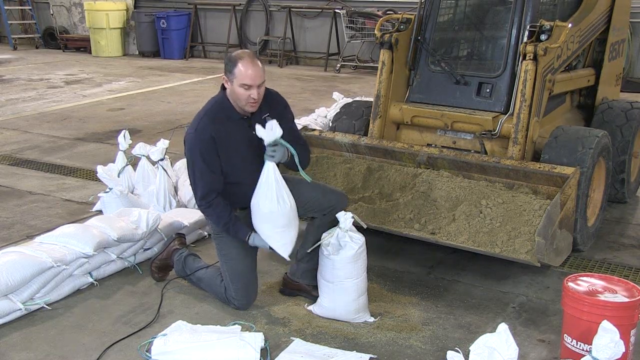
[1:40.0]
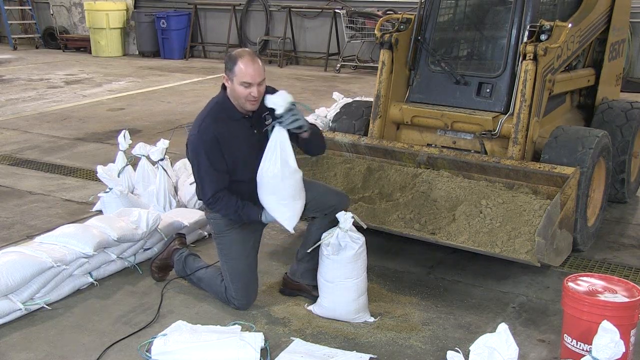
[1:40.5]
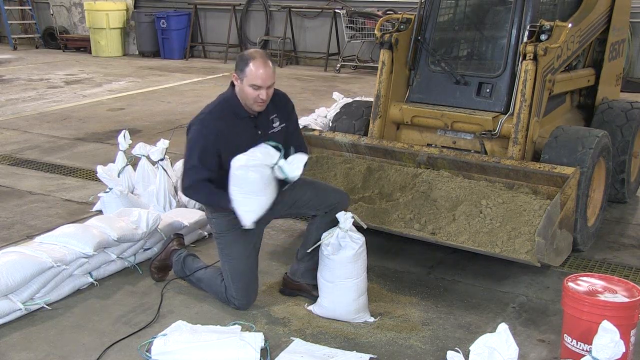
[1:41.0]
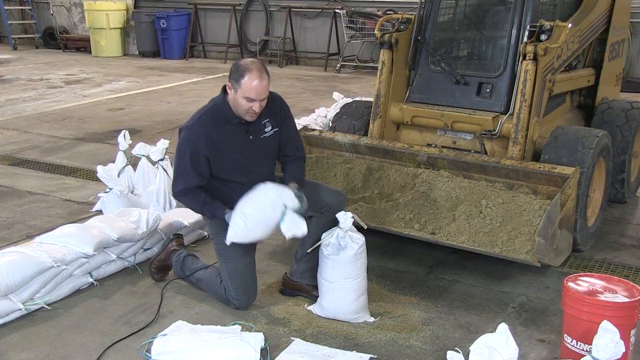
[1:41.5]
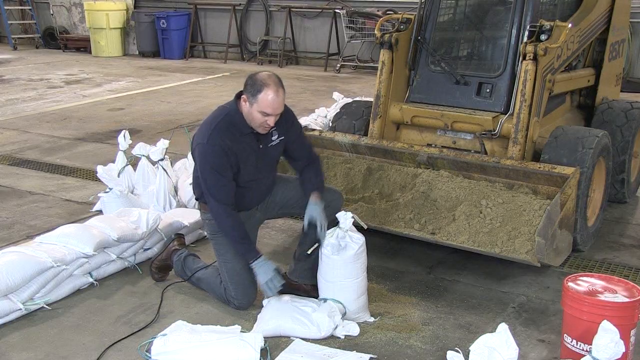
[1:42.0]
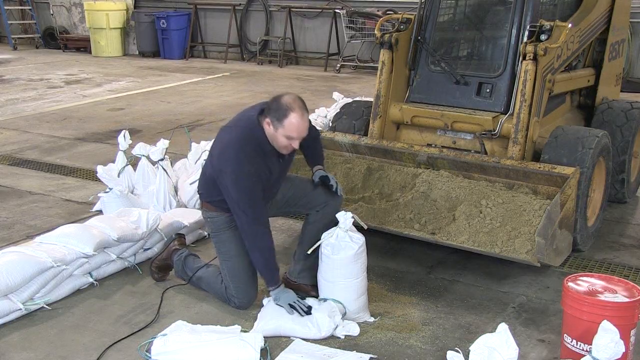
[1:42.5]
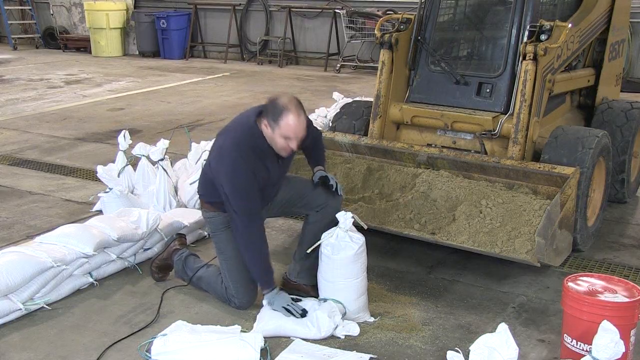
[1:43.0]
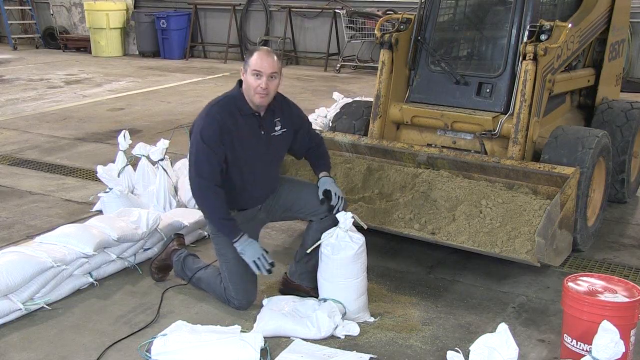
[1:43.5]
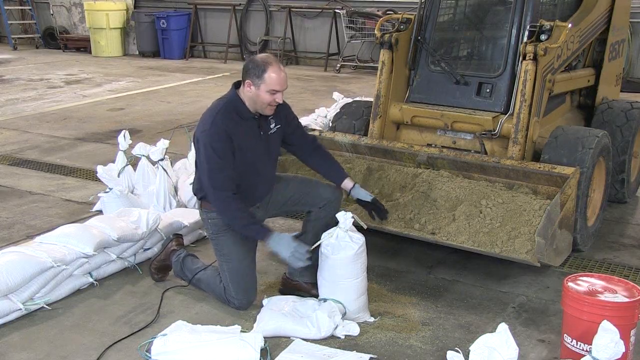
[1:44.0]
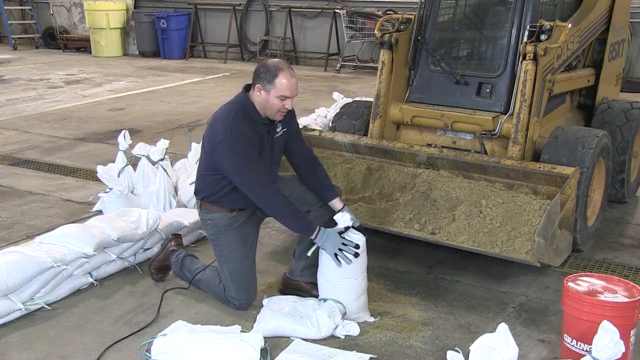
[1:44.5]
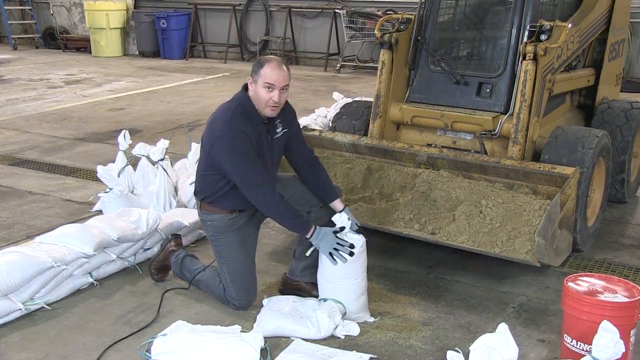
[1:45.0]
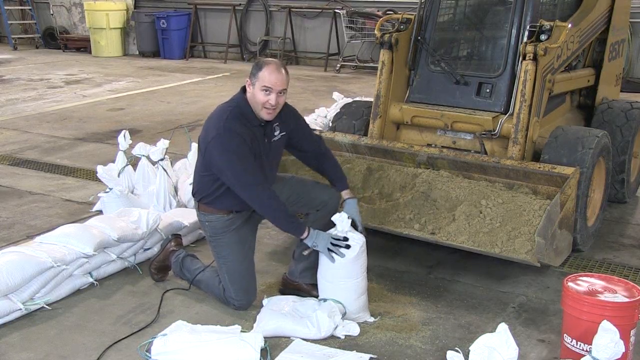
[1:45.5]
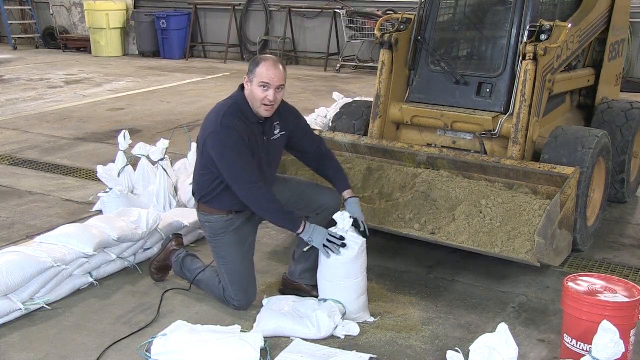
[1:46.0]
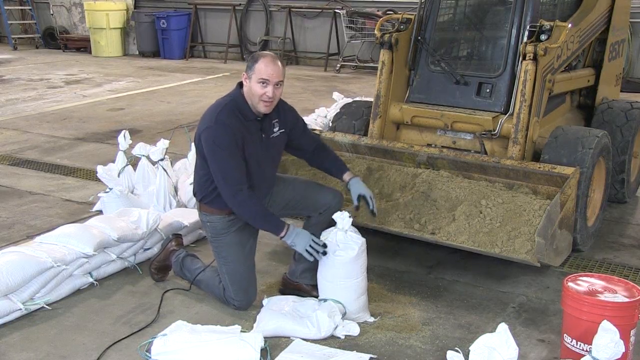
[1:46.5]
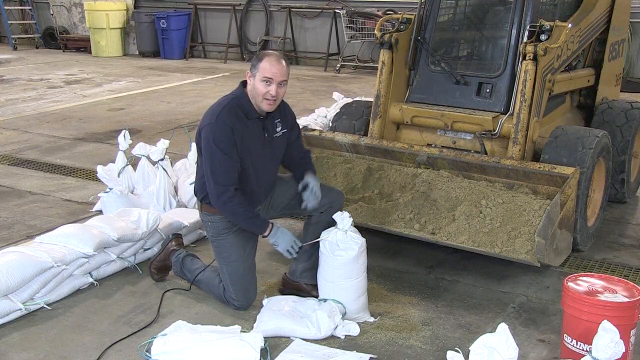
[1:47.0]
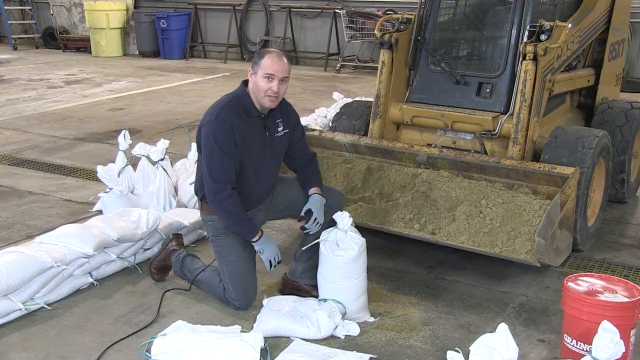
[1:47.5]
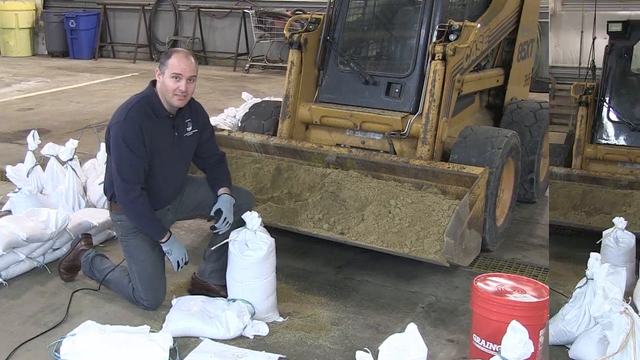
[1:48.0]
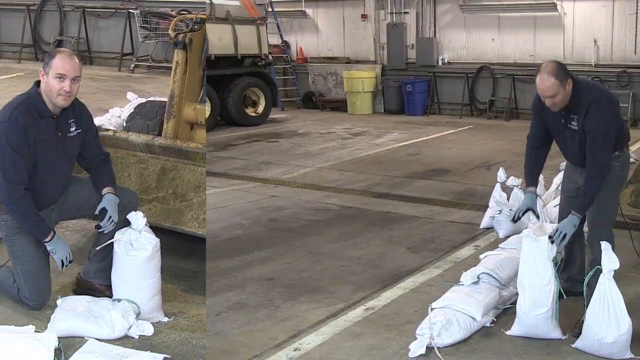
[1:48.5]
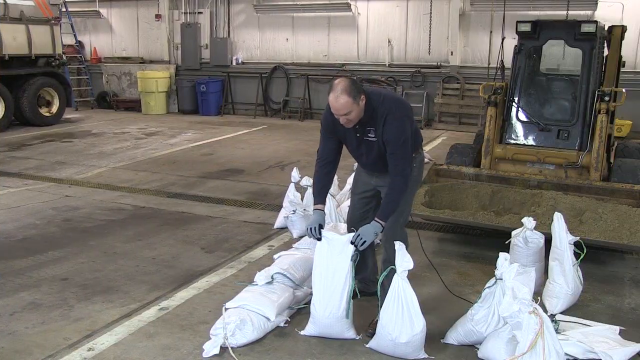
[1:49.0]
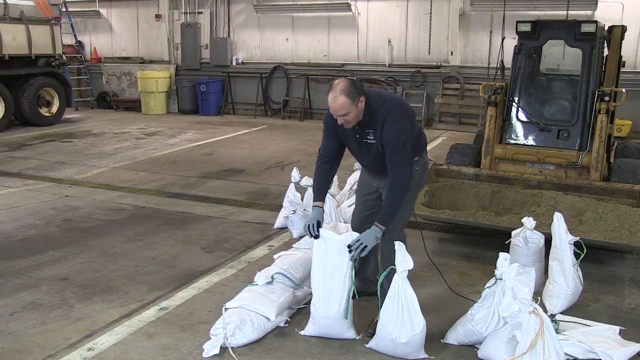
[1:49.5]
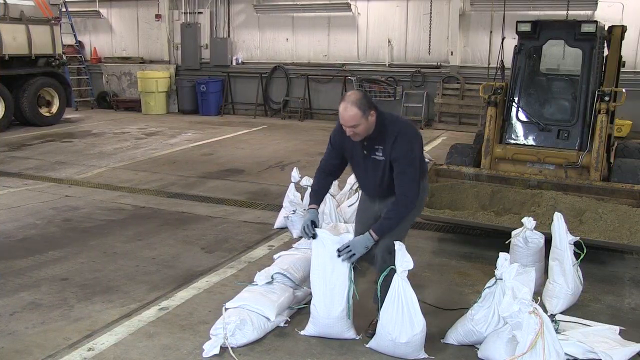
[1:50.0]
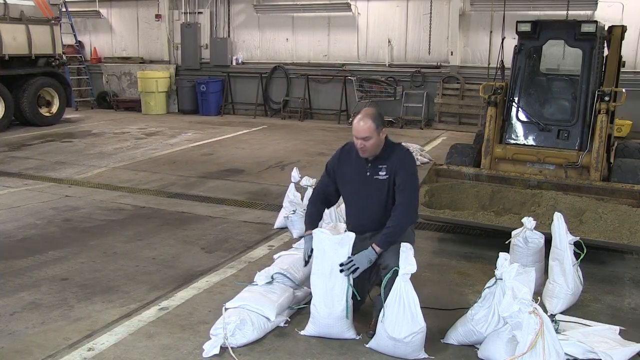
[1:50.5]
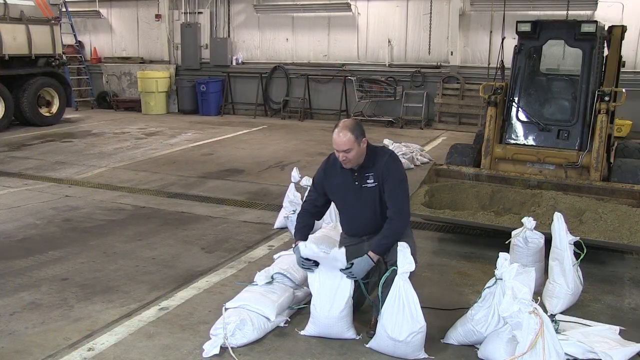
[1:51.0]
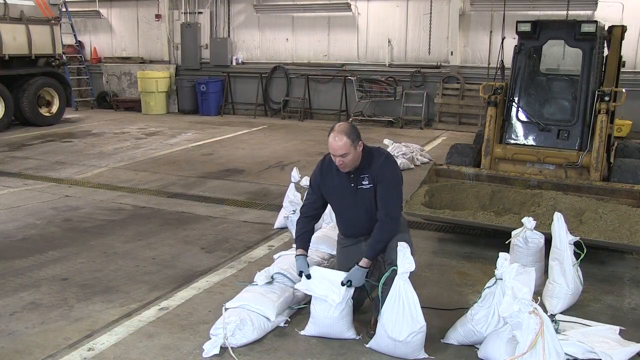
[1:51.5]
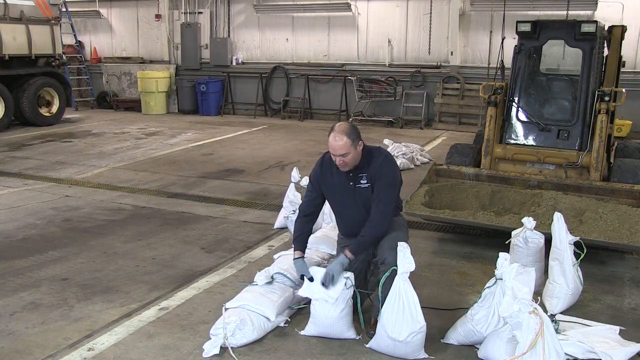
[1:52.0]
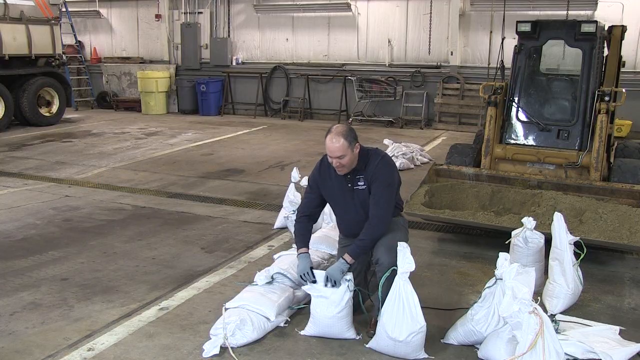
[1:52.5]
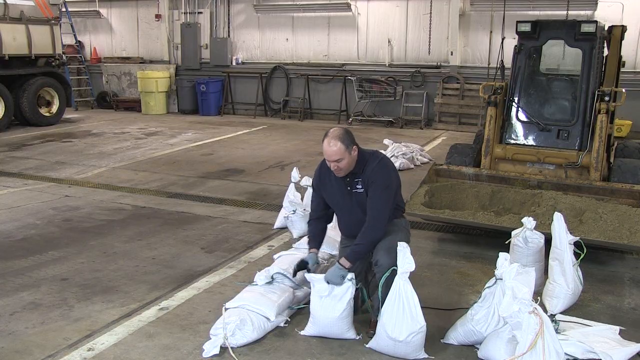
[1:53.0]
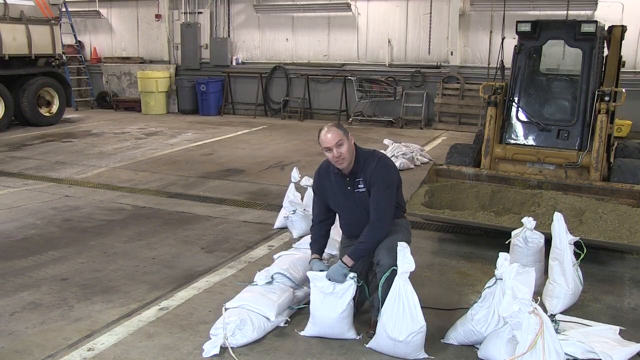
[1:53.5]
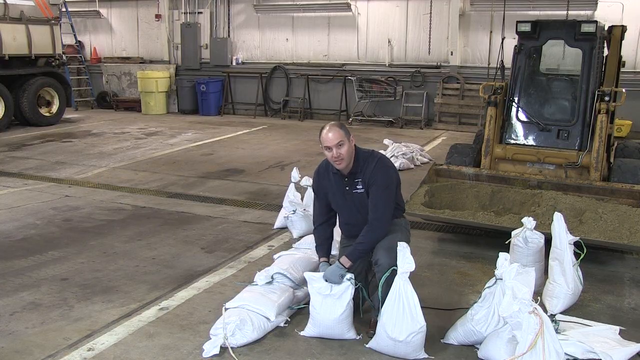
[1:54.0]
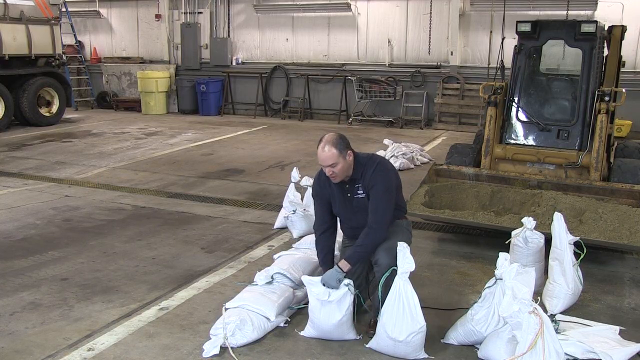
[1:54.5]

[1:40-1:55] The speaker, still kneeling in the warehouse, gestures to the green bag filled two-thirds of the way and lays it flat on the ground. He slaps the bag with his gloved hand, apparently to indicate that it can easily be molded into a barrier. The video then switches to him closer to the example barrier, holding a bag that is still open and filled two-thirds of the way. He folds the remaining part of the bag over so that the unfilled portion flaps. He keeps speaking to the camera.